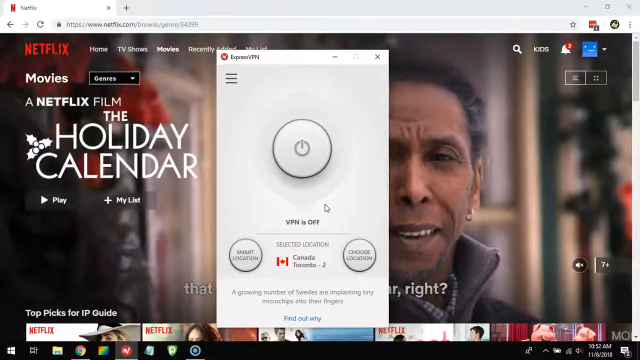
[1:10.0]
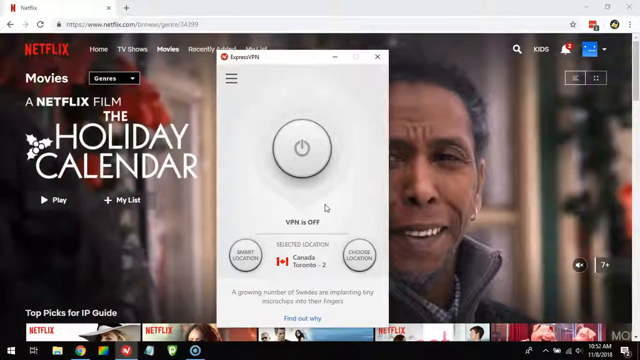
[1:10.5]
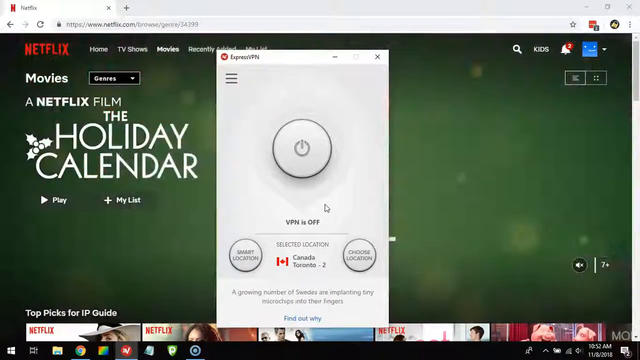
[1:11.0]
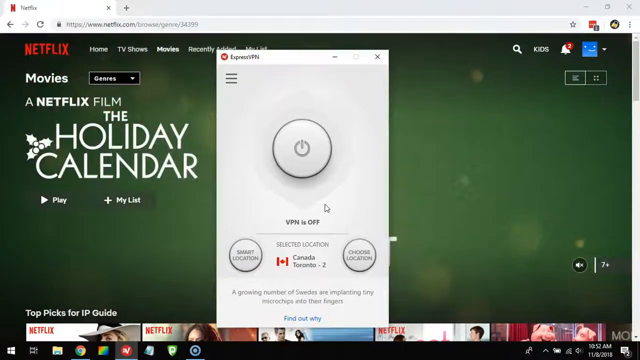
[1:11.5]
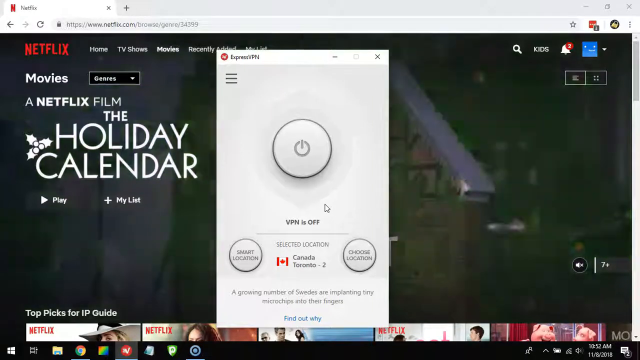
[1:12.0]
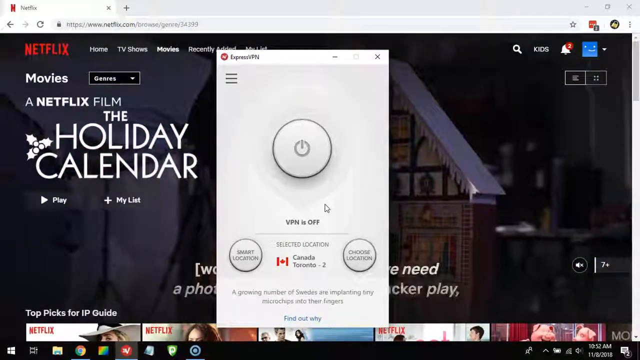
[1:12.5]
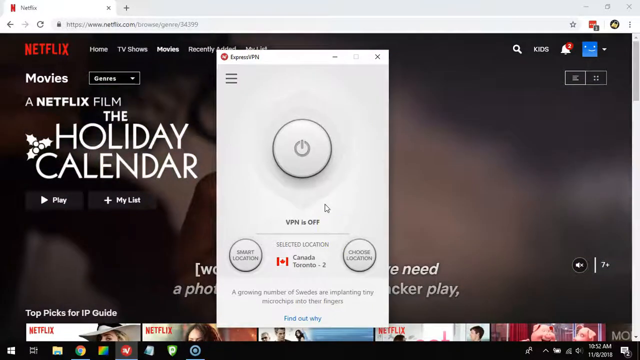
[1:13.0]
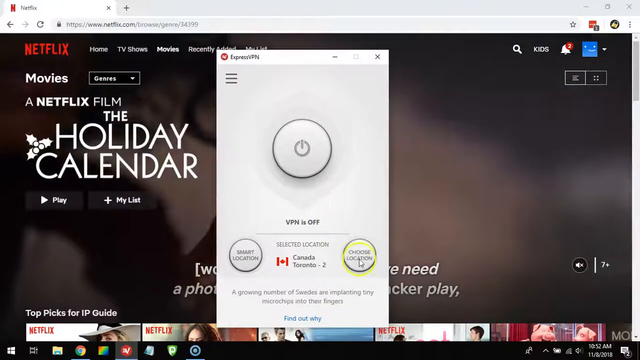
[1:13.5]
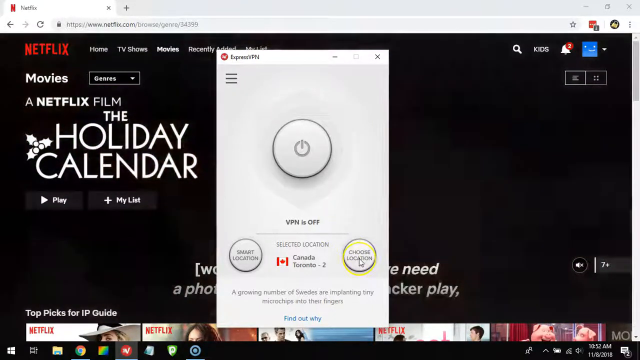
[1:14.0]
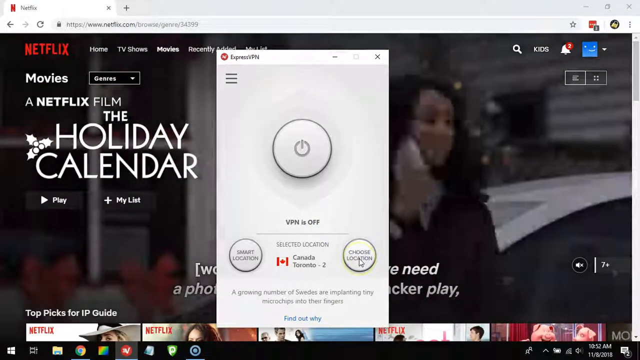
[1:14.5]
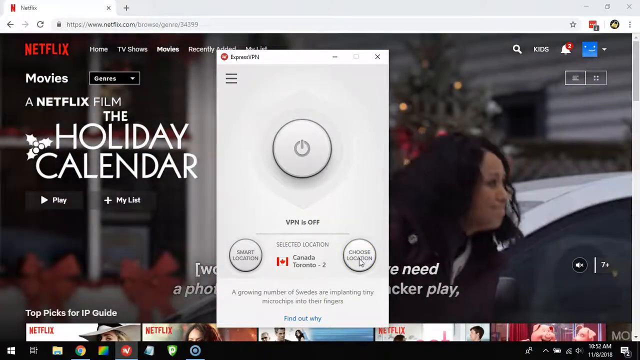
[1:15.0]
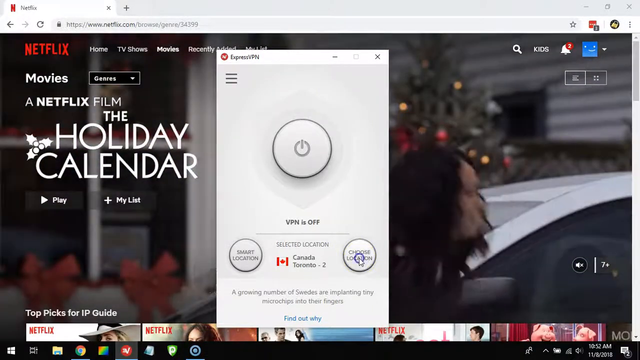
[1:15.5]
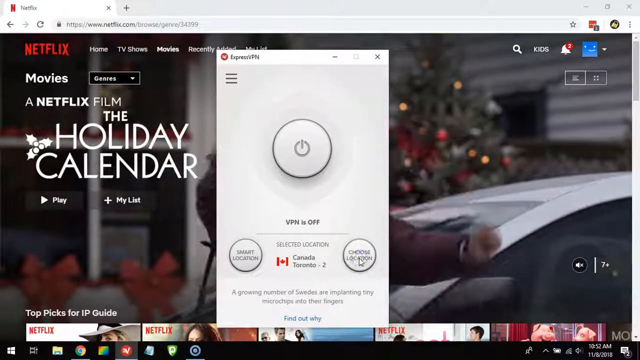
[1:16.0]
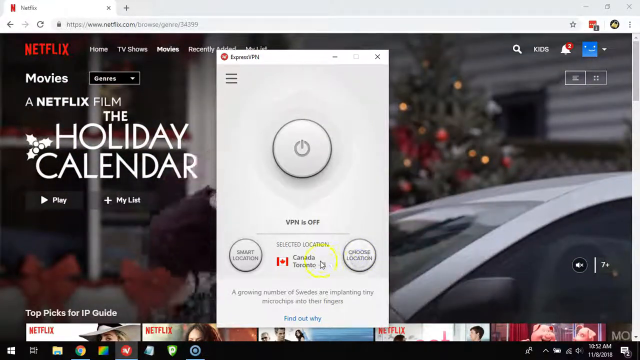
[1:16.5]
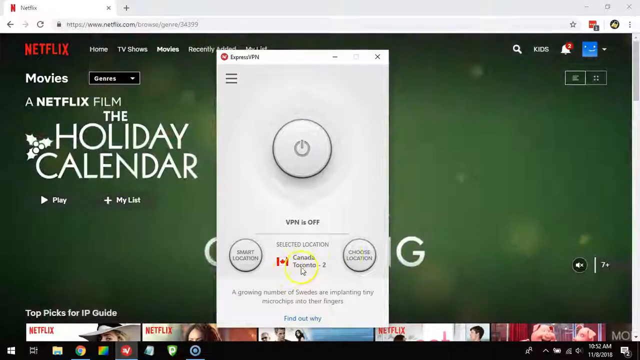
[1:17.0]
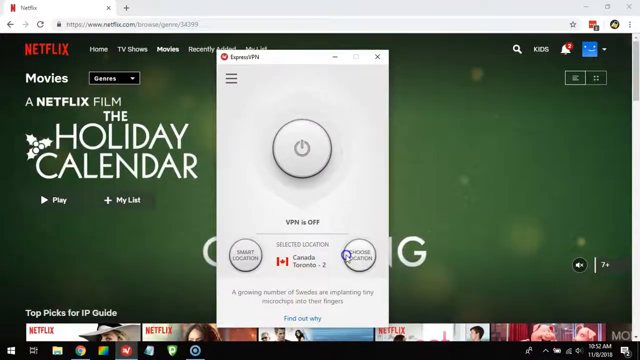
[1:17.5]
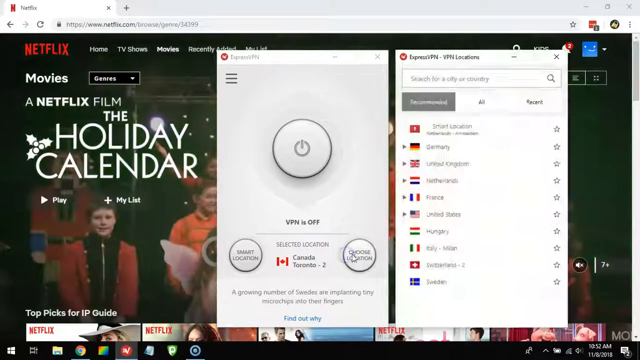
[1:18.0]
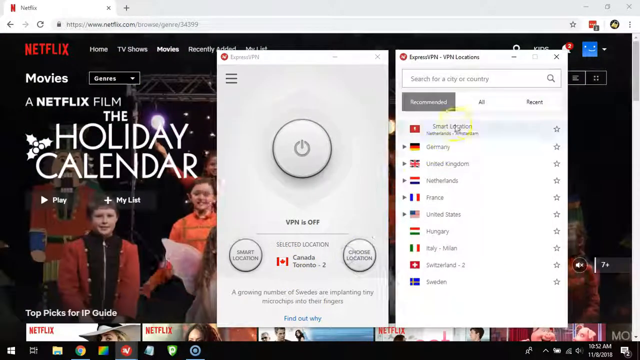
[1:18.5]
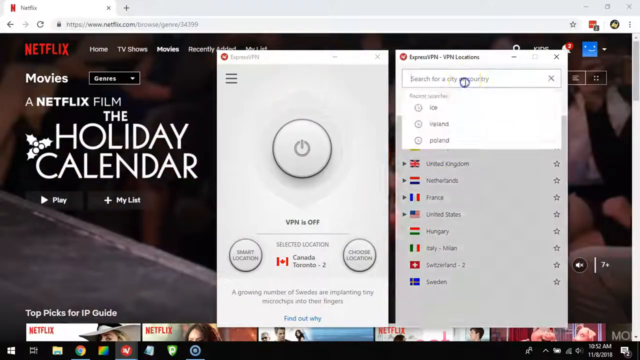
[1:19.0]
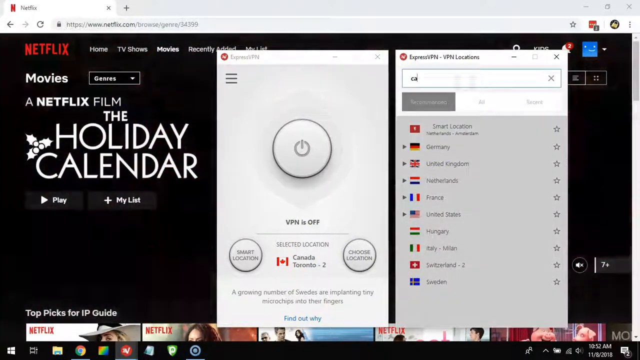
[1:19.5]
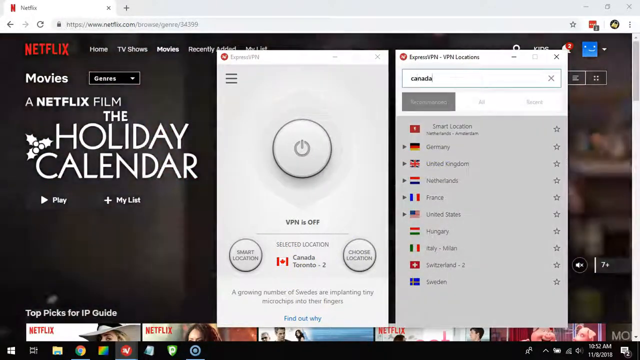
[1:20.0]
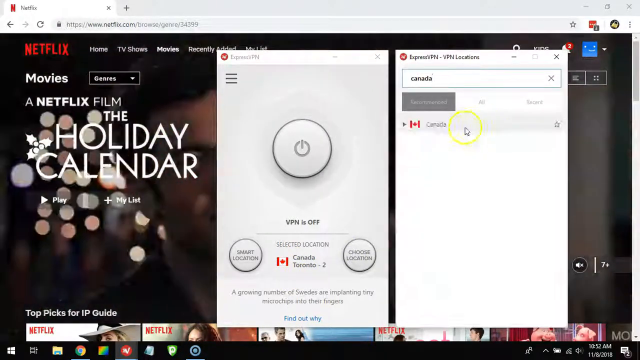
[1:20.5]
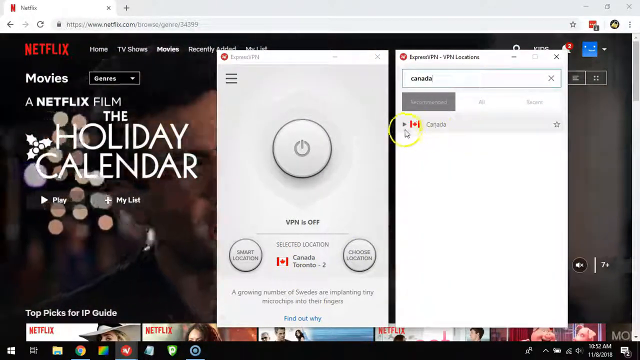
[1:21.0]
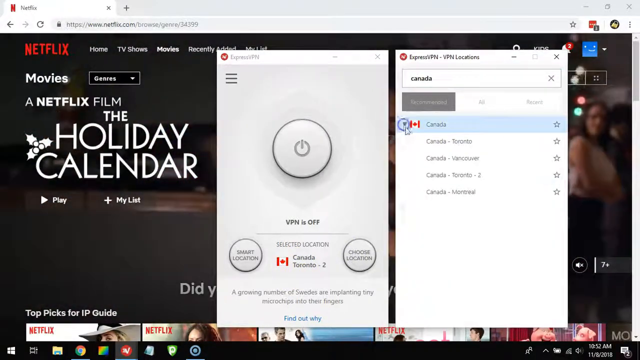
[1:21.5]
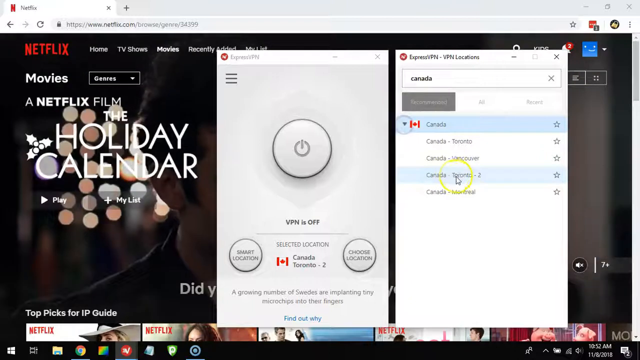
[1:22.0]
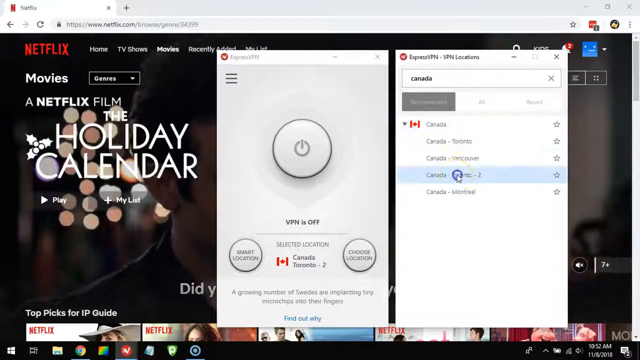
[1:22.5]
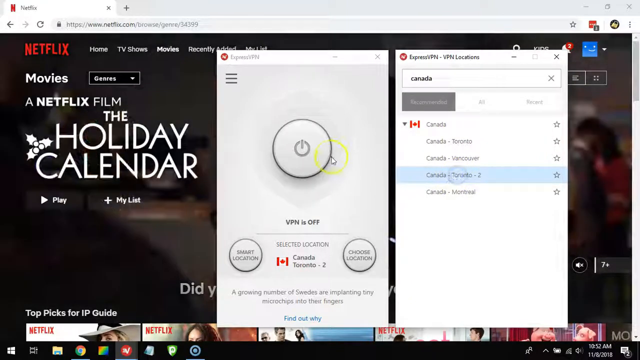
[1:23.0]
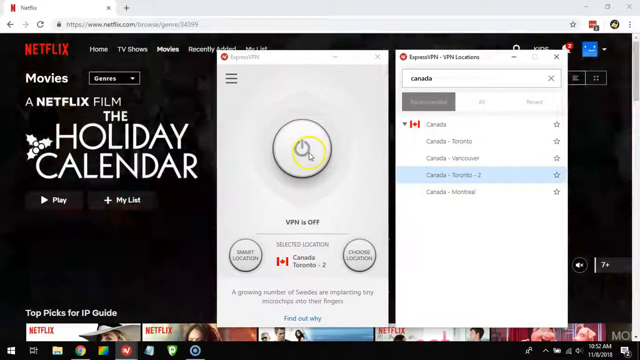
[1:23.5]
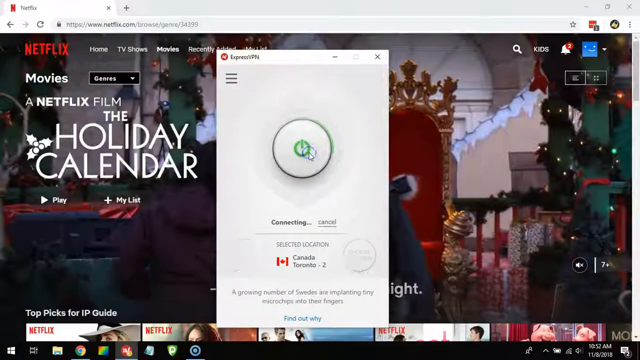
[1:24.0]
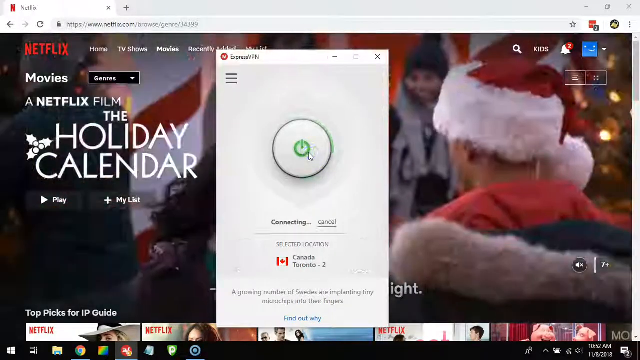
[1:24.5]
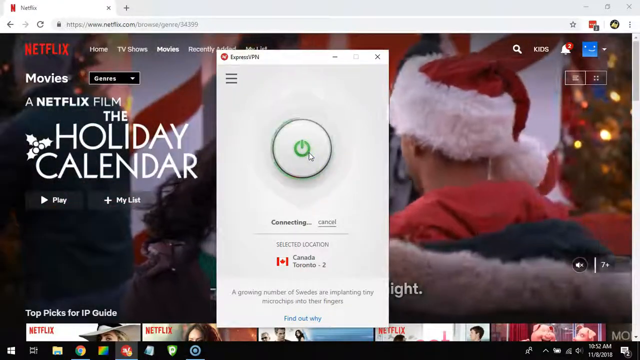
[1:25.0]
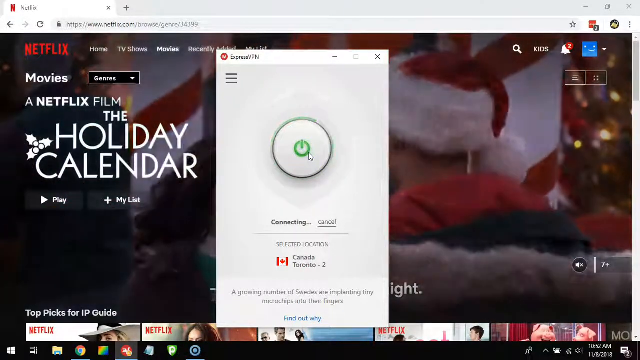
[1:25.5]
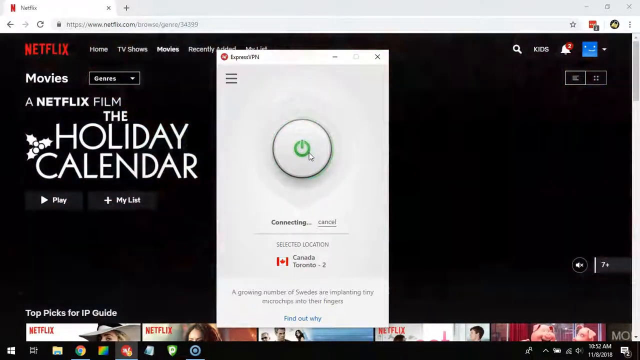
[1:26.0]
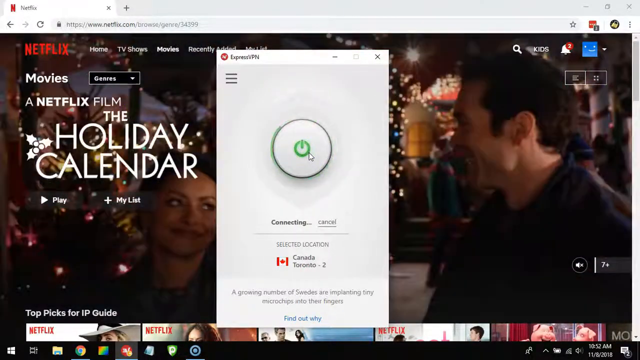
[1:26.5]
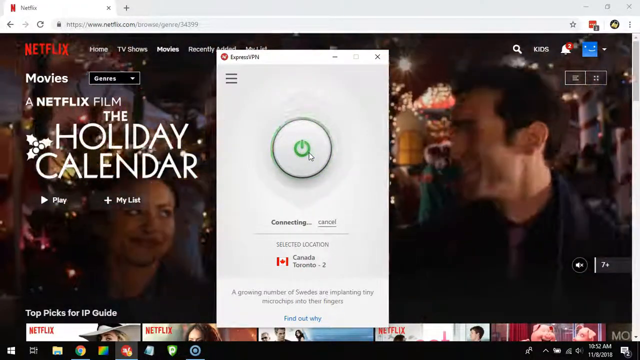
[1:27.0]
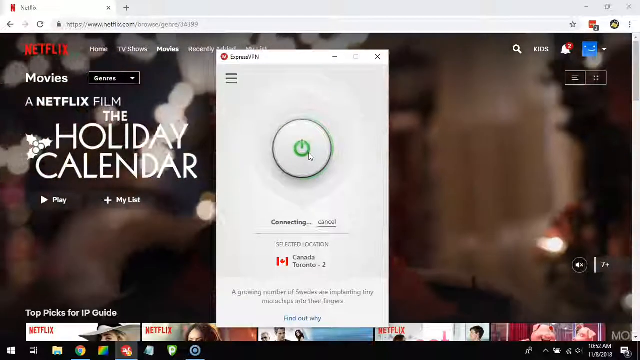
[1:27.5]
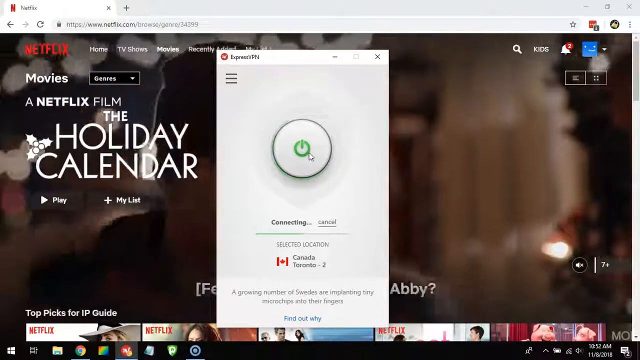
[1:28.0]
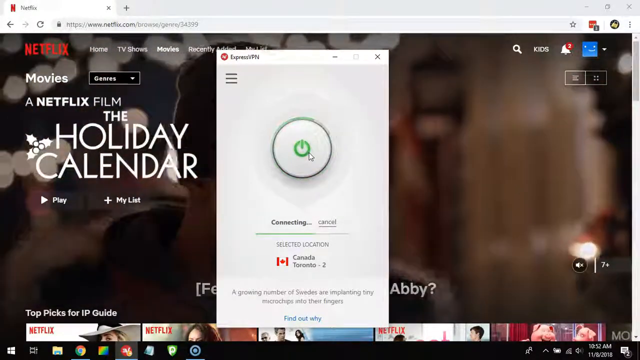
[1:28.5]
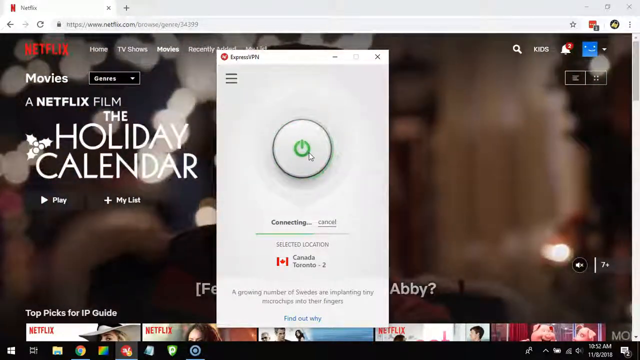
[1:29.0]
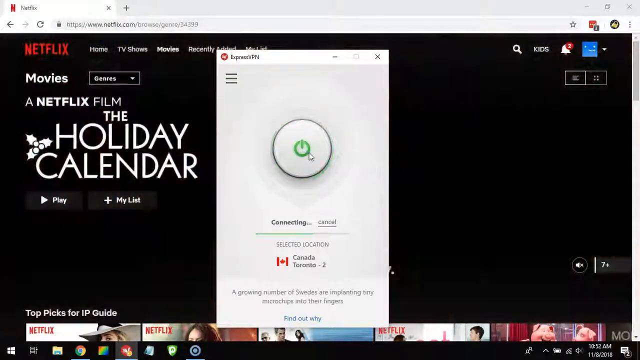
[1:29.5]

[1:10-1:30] Choose Location is selected, and another box pops up next to it. Canada is typed into the search bar, and a drop-down menu lists four options: Toronto, Vancouver, Toronto 2 and Montreal. Toronto 2 is selected and the VPN is turned on, and it begins loading.